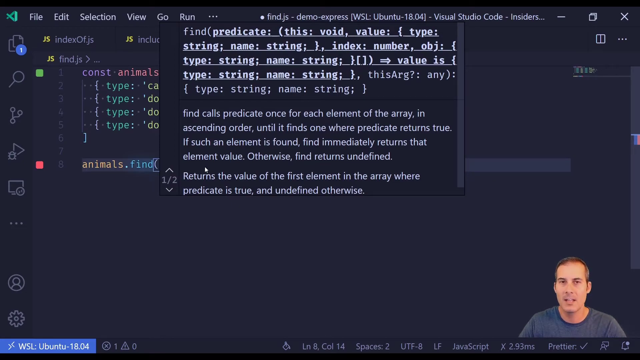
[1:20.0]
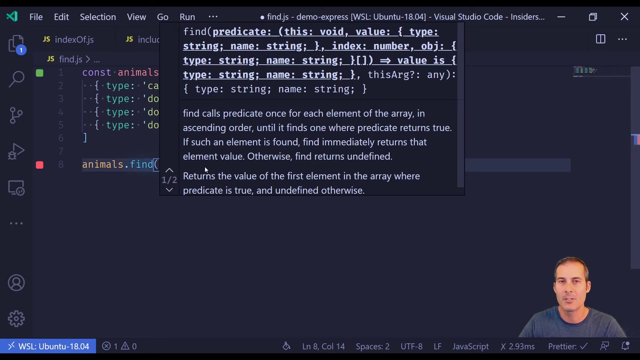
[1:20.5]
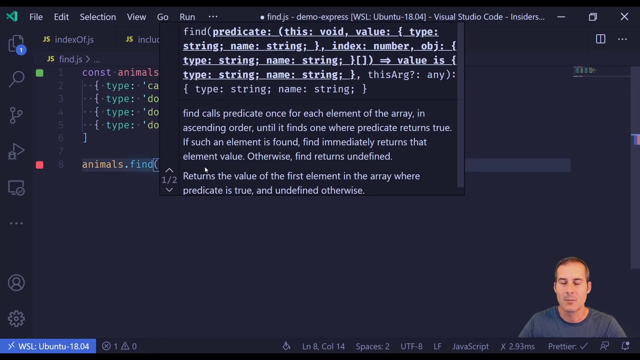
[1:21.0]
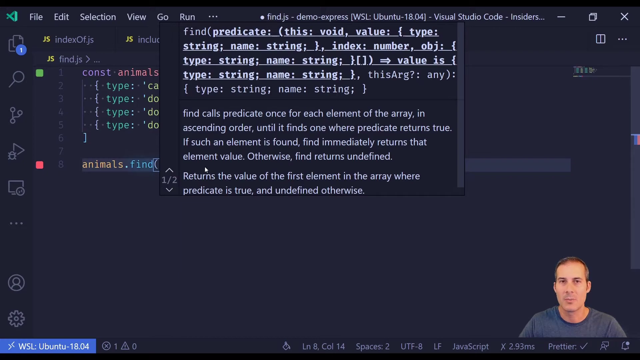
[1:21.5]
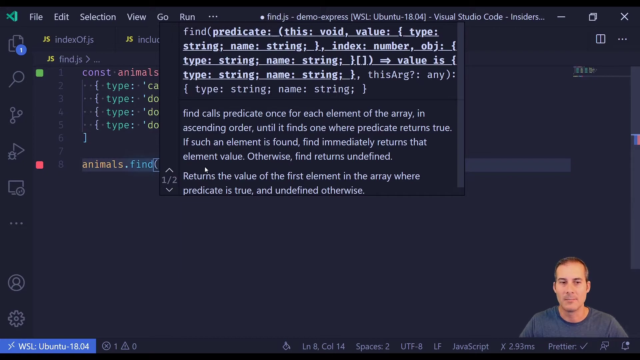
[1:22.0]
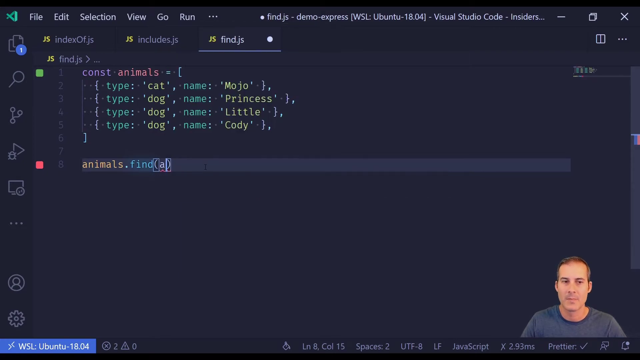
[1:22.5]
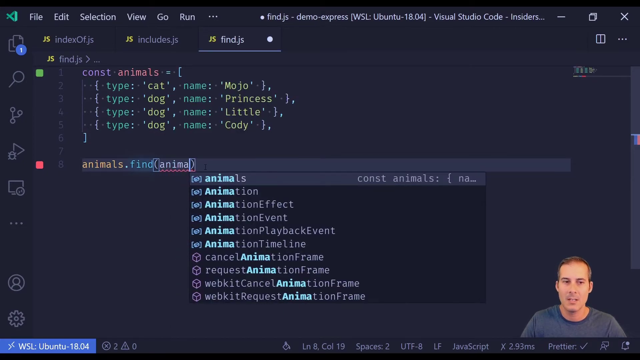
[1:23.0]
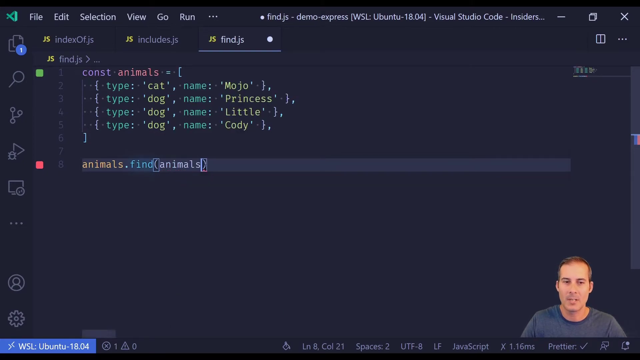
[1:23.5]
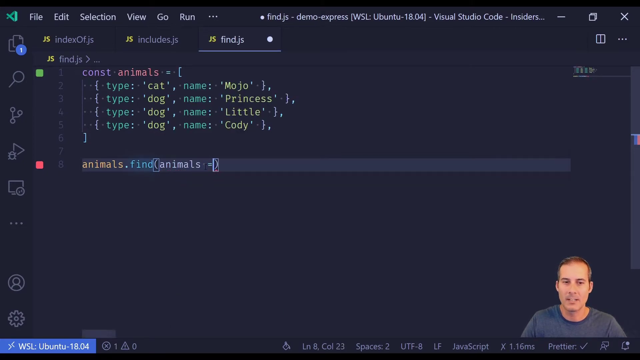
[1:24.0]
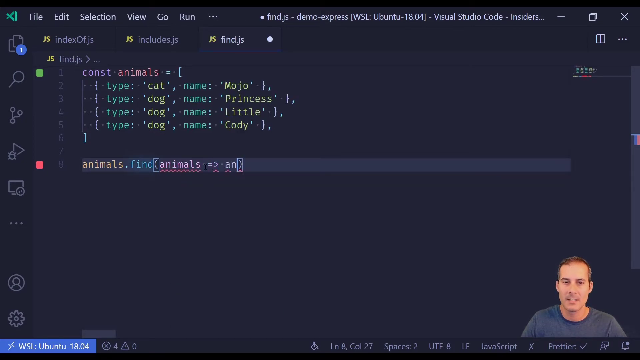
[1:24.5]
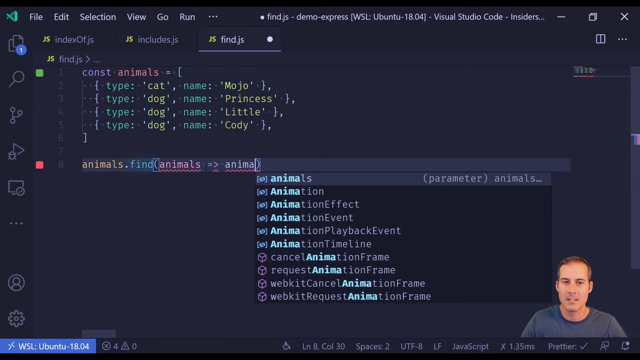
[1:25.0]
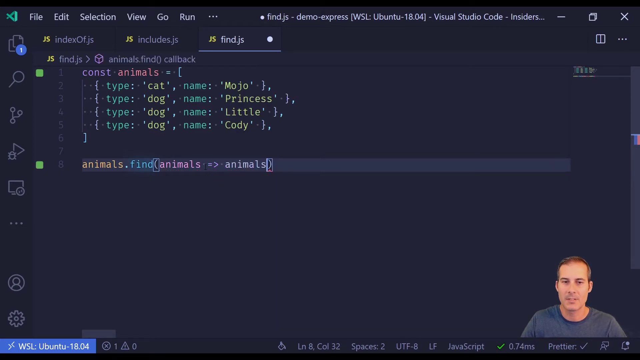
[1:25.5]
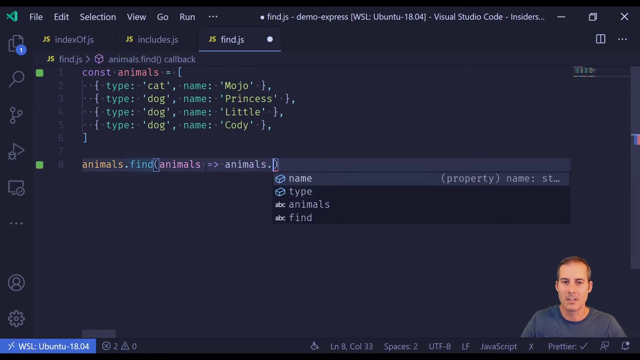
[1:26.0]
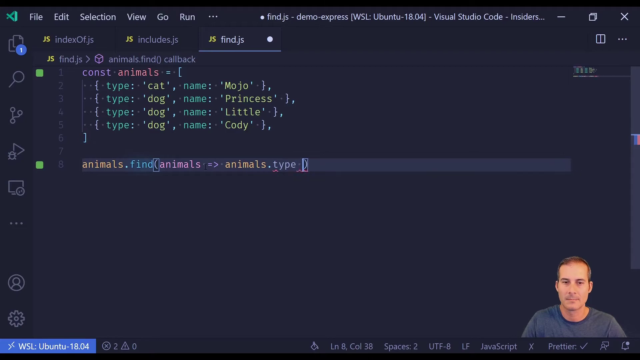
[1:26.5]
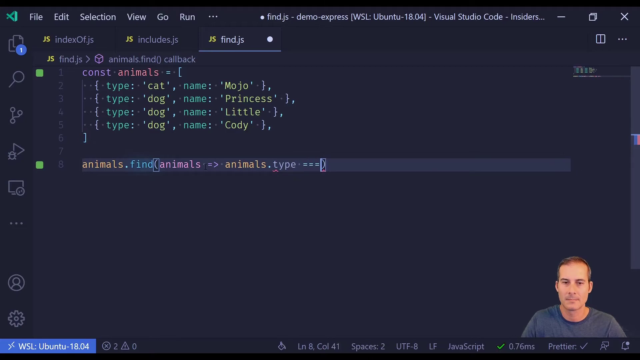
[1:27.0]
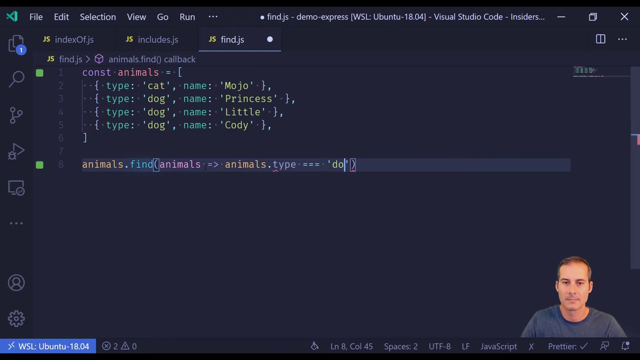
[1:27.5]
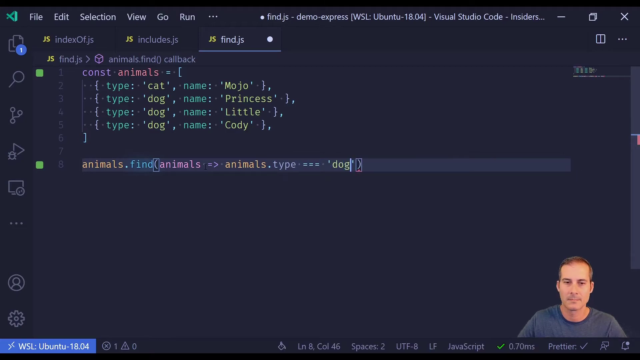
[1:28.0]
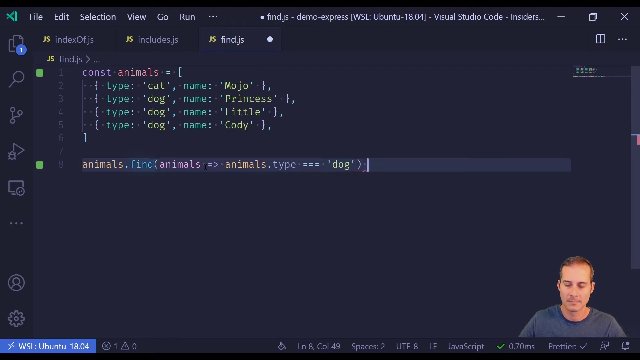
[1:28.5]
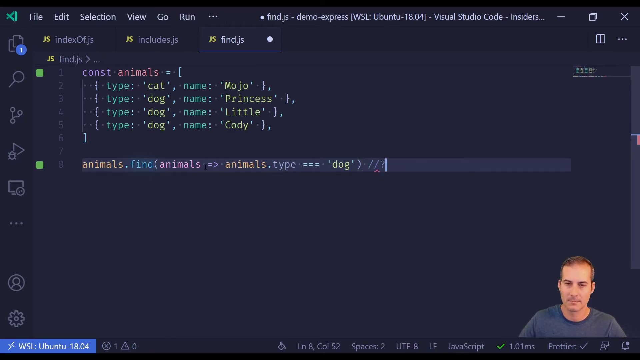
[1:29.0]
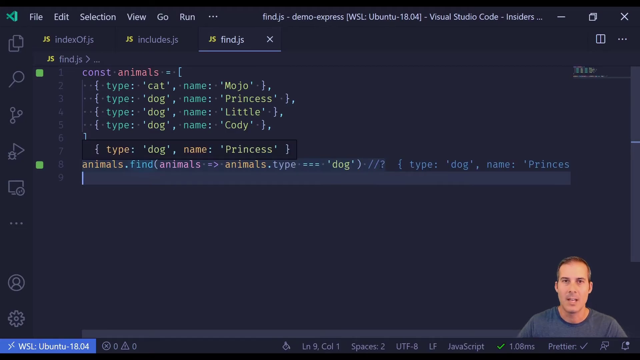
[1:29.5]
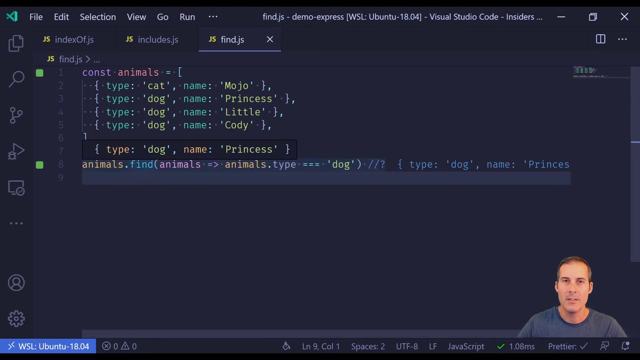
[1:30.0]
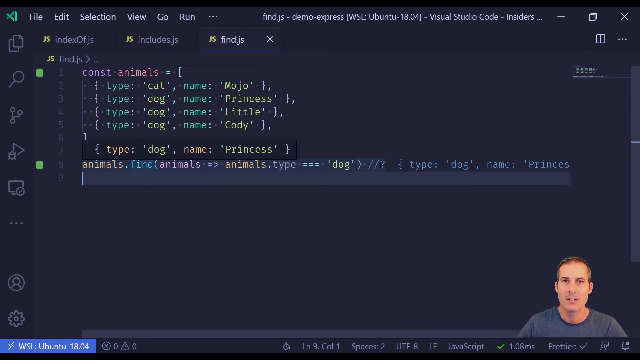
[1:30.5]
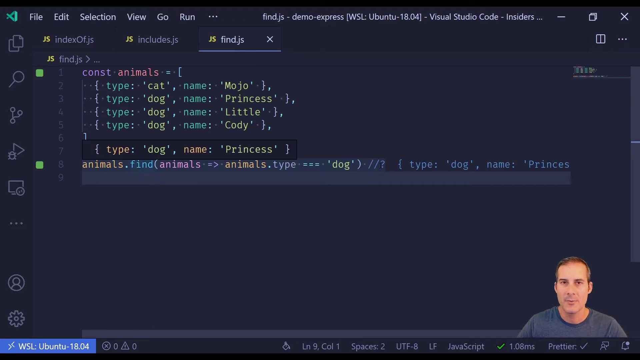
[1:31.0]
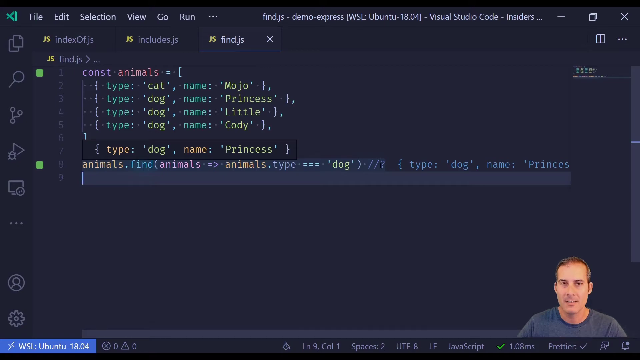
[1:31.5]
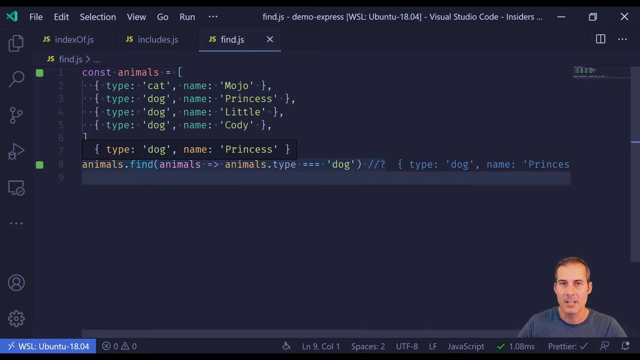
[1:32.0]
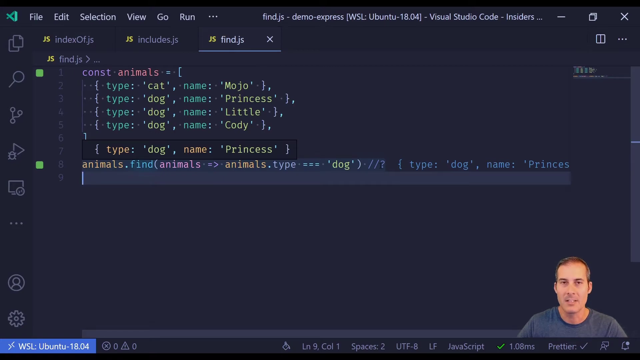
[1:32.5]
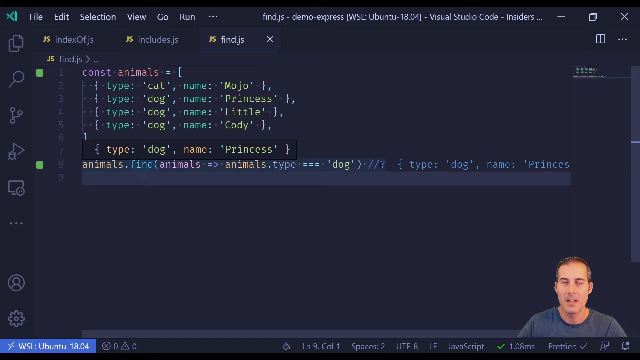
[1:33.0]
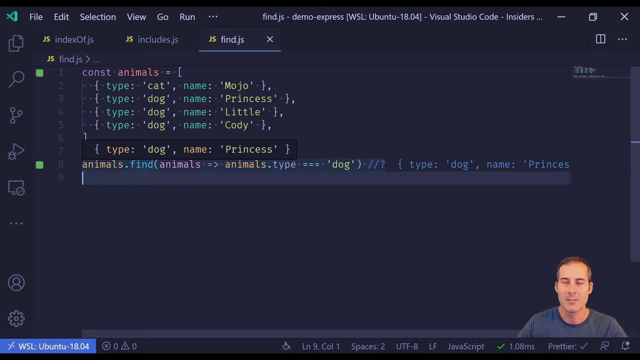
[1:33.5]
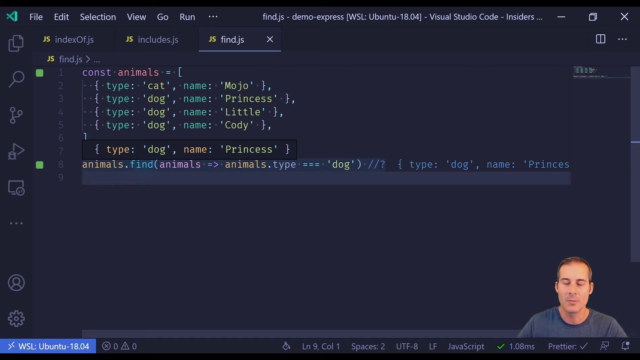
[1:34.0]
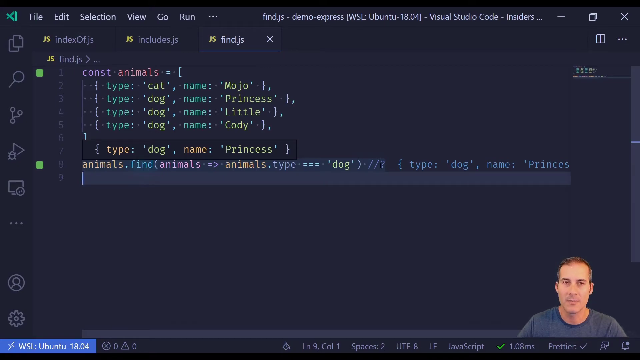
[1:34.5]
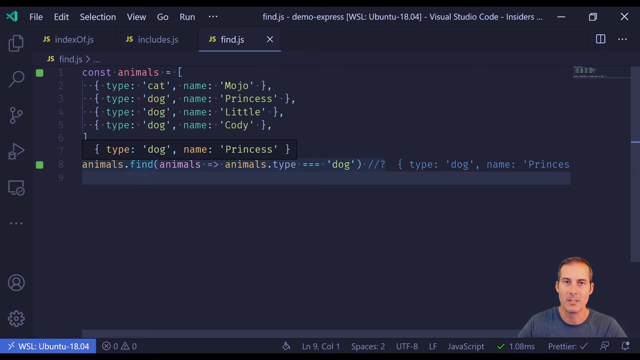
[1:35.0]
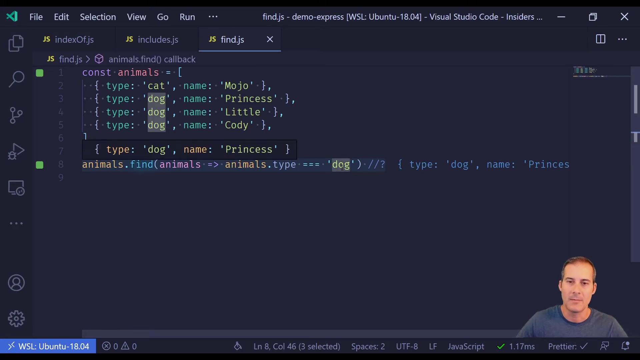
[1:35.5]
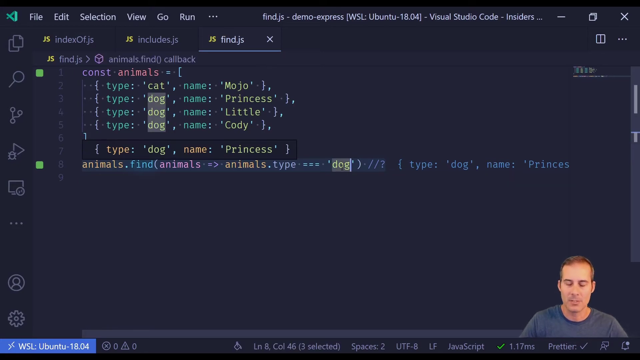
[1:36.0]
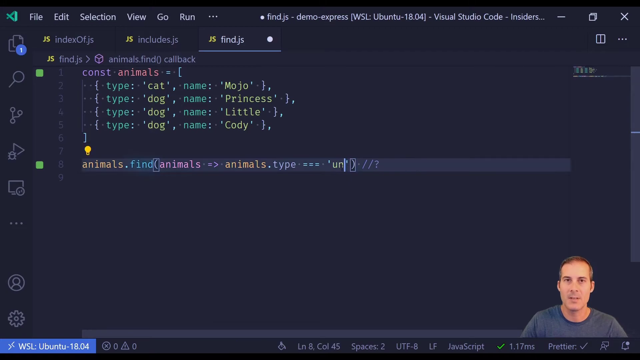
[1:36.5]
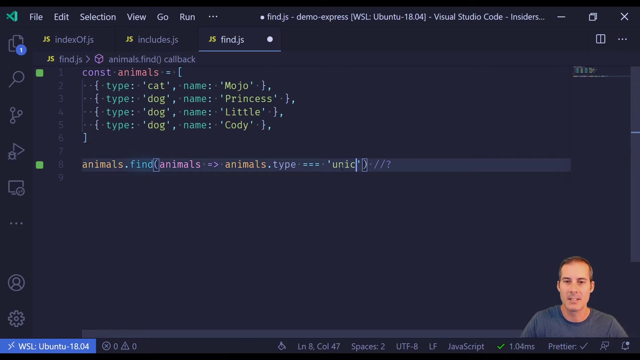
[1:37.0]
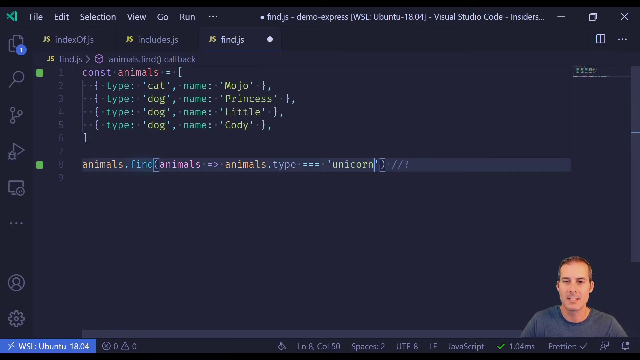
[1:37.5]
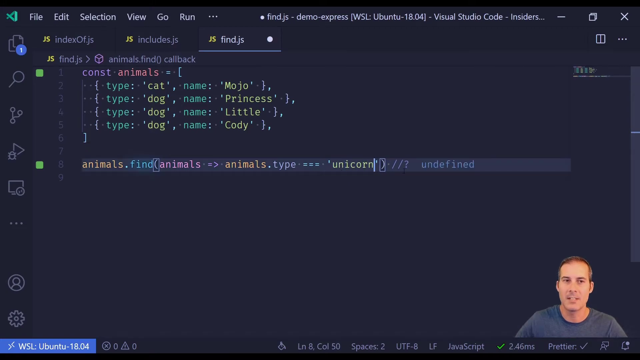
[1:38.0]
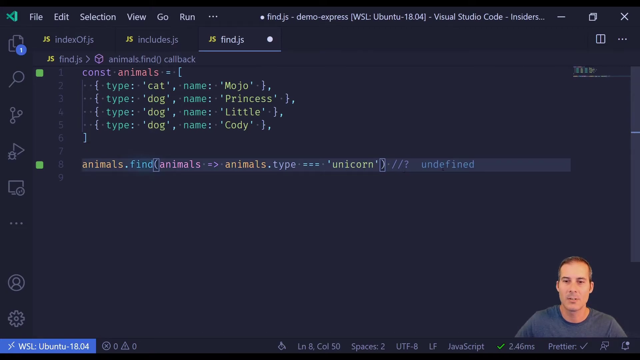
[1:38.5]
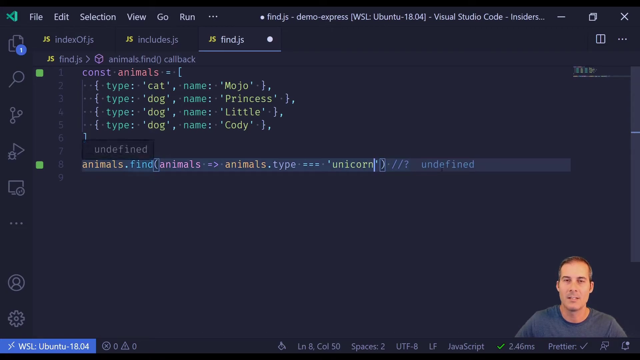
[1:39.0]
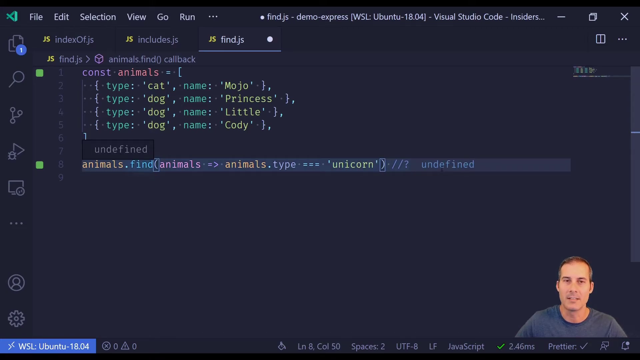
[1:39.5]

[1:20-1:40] The screen shows "find predicate" and "this void value type string name string", followed by the text "find calls predicate once for each element of the array in ascending order until it finds one where predicate returns true. If such element is found find immediately returns that element value otherwise find returns undefined returns the value of the first element in the array where predicate is true and undefined otherwise." Joel is in the bottom corner. He types "animals", "find animals" and then "dog". As he types, the operation and the available options come up while he decides which changes to make.